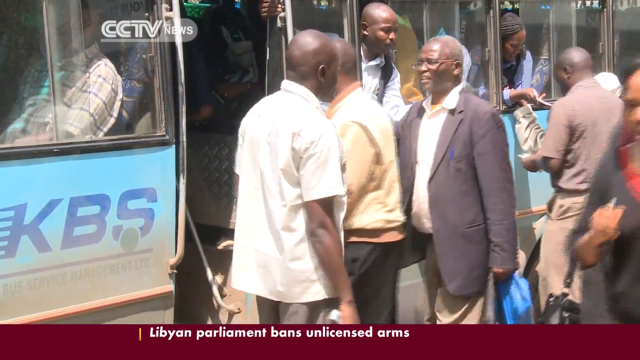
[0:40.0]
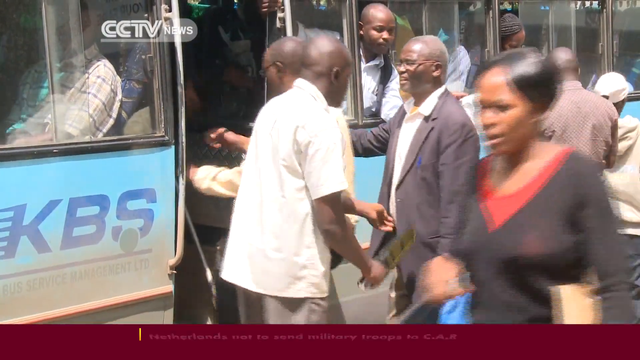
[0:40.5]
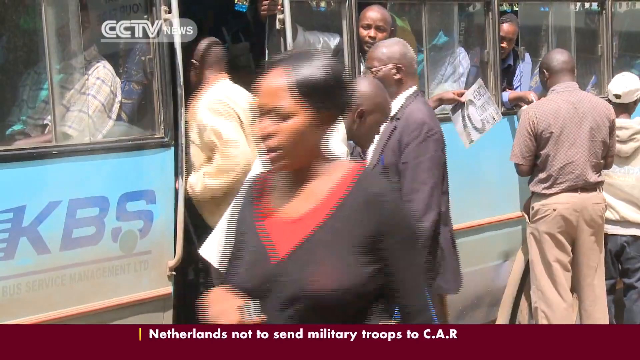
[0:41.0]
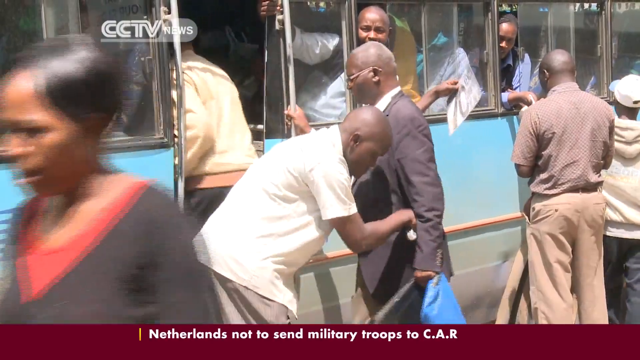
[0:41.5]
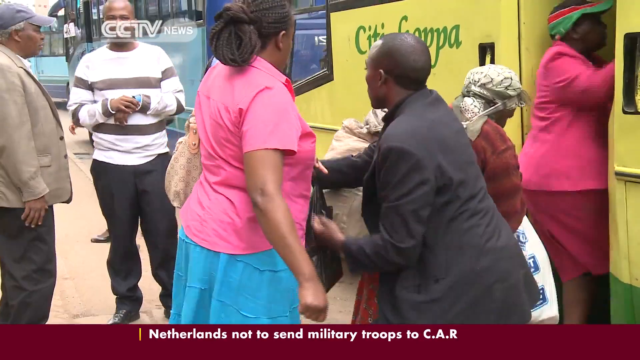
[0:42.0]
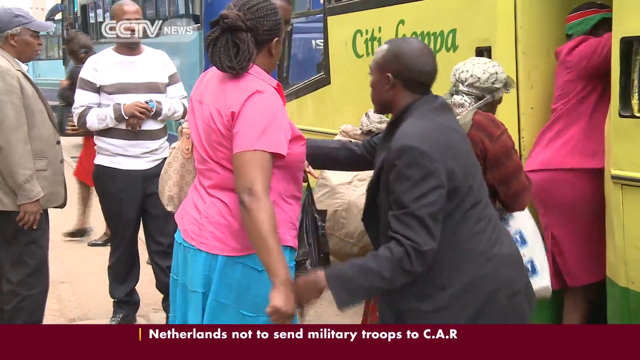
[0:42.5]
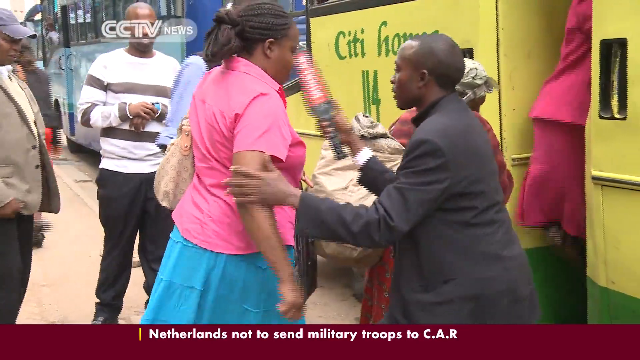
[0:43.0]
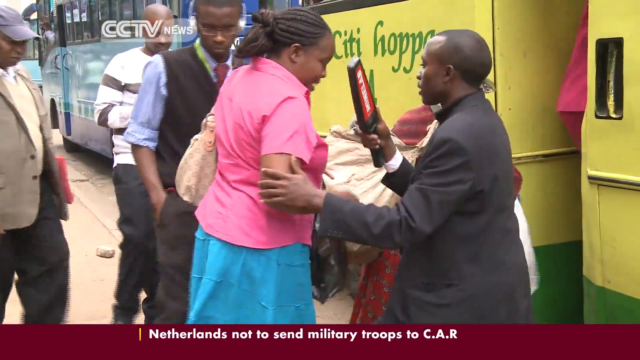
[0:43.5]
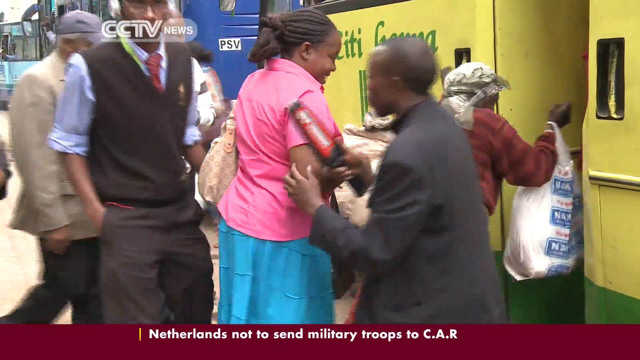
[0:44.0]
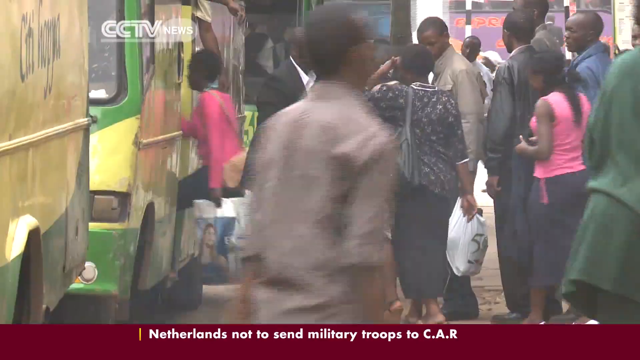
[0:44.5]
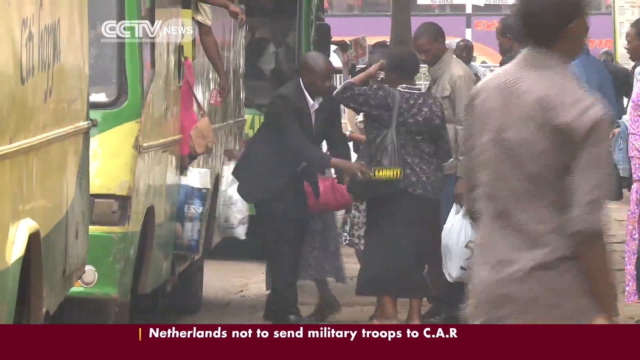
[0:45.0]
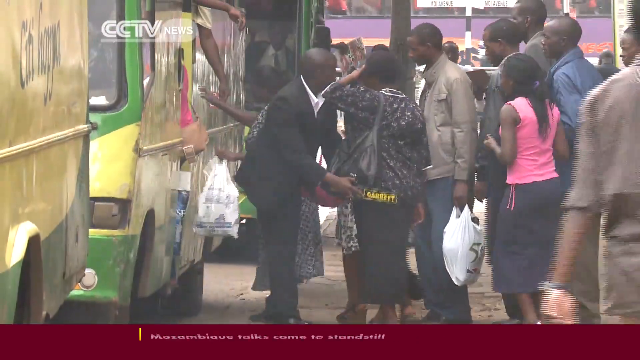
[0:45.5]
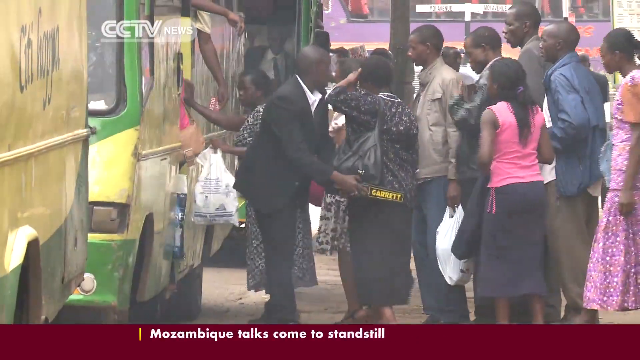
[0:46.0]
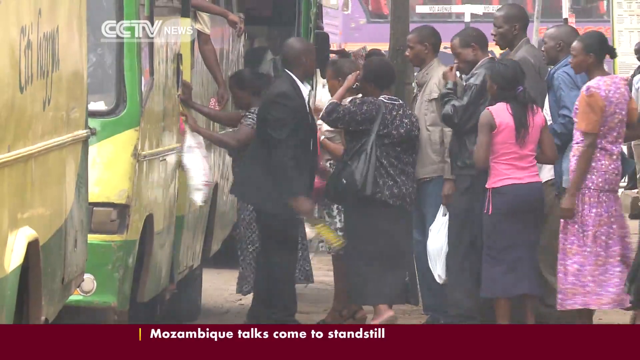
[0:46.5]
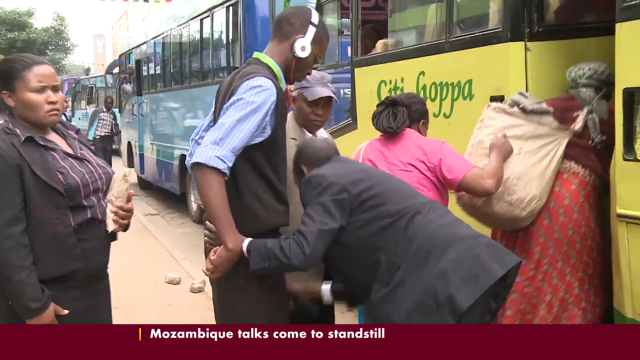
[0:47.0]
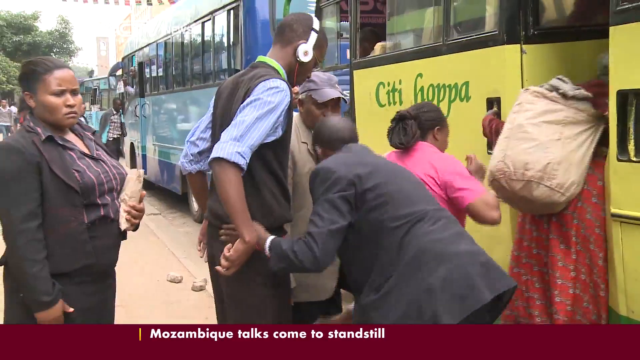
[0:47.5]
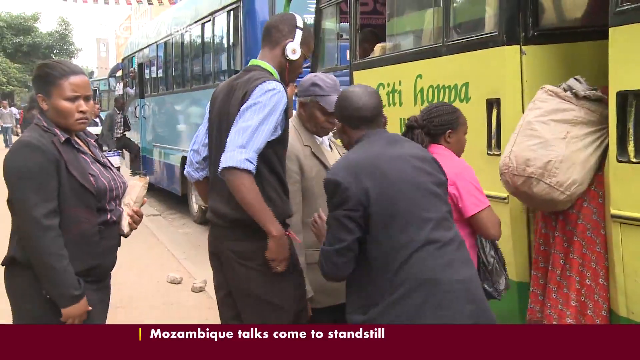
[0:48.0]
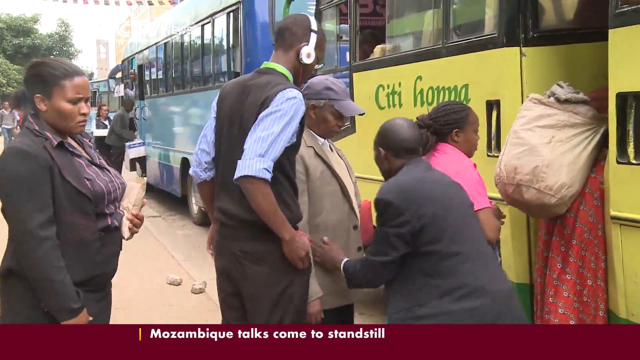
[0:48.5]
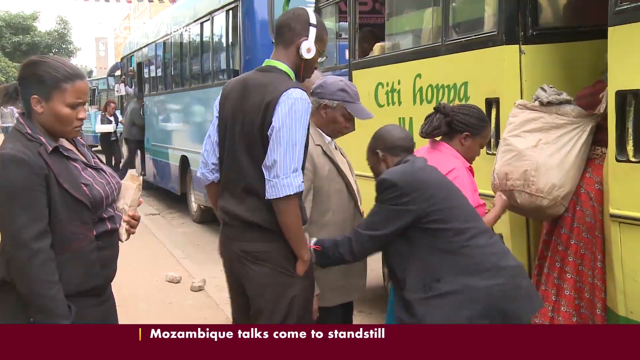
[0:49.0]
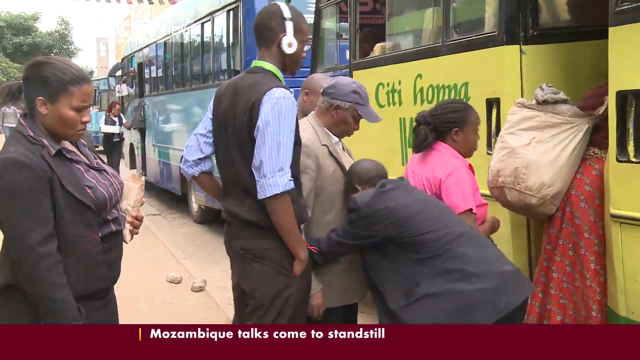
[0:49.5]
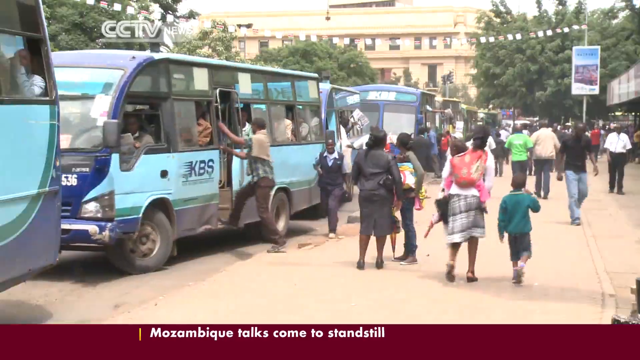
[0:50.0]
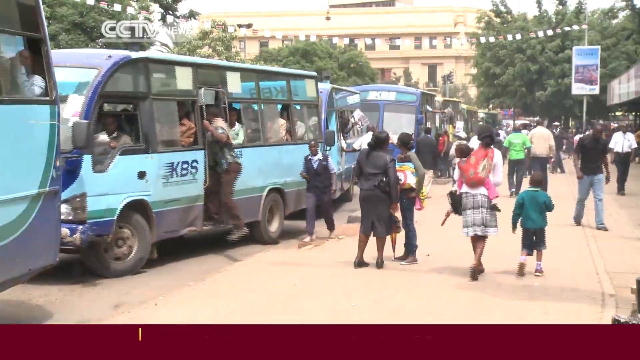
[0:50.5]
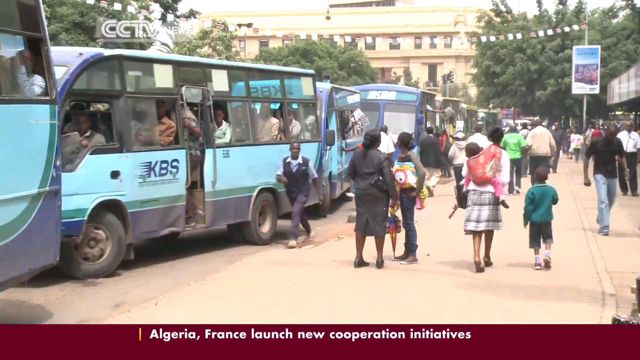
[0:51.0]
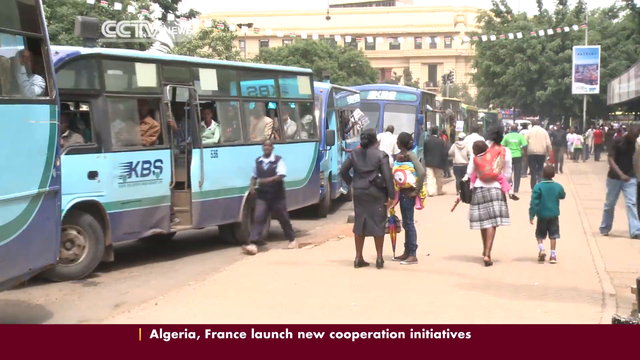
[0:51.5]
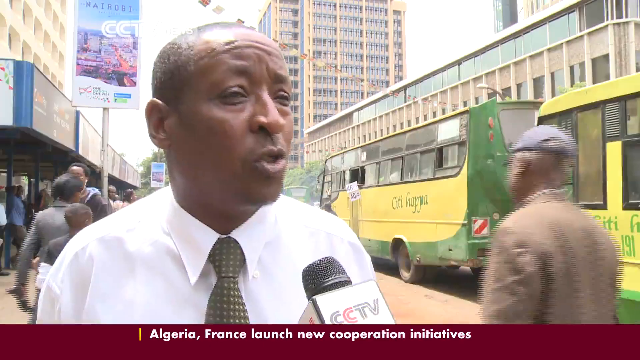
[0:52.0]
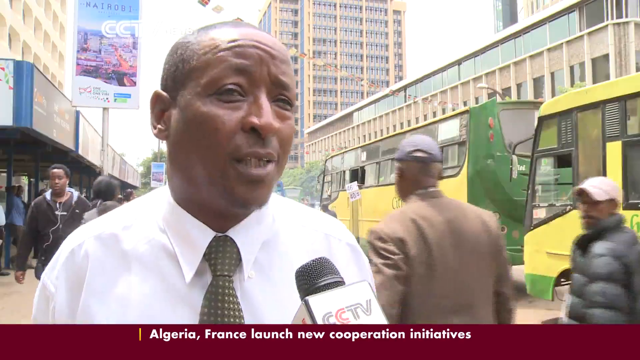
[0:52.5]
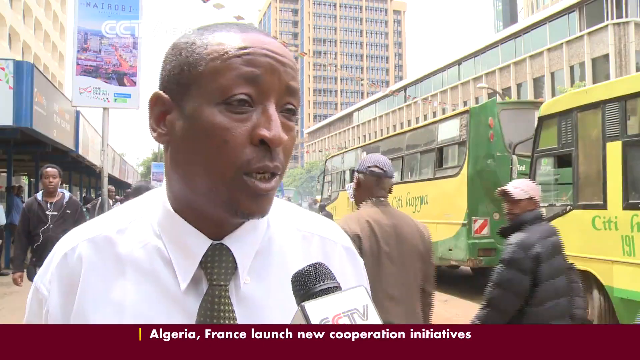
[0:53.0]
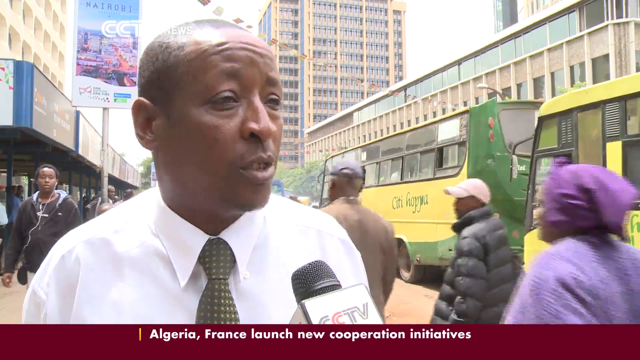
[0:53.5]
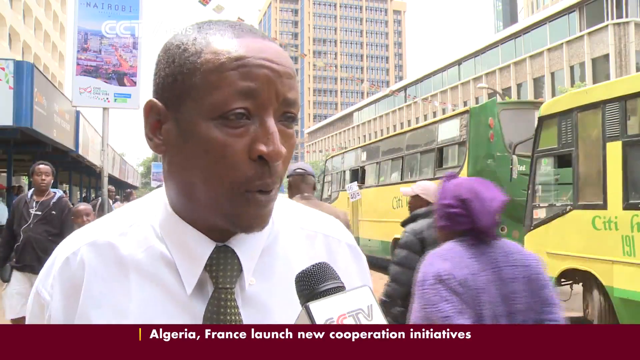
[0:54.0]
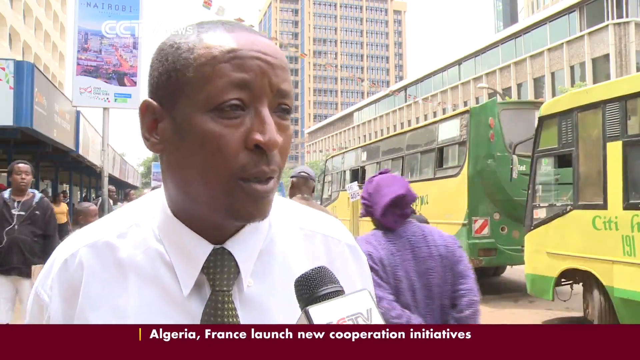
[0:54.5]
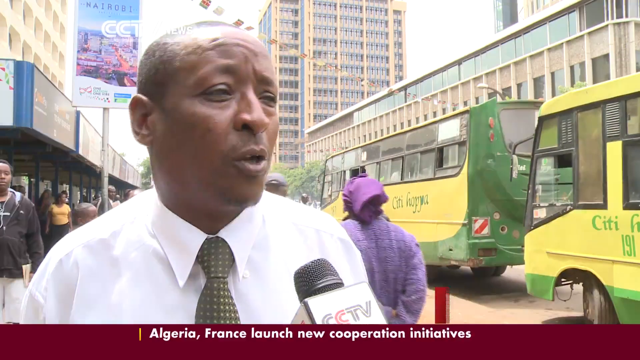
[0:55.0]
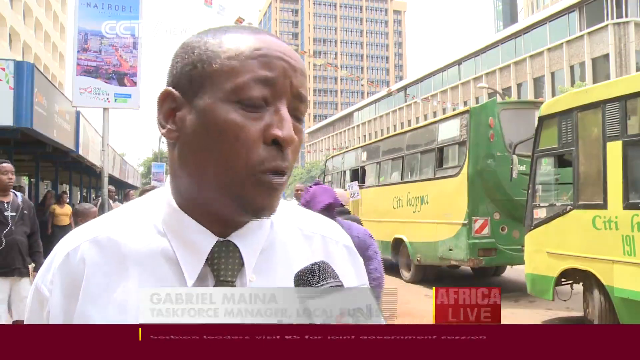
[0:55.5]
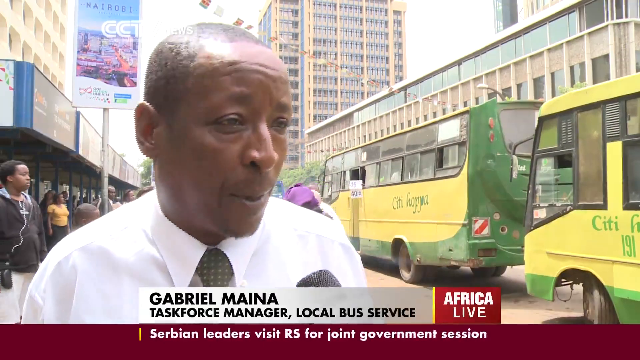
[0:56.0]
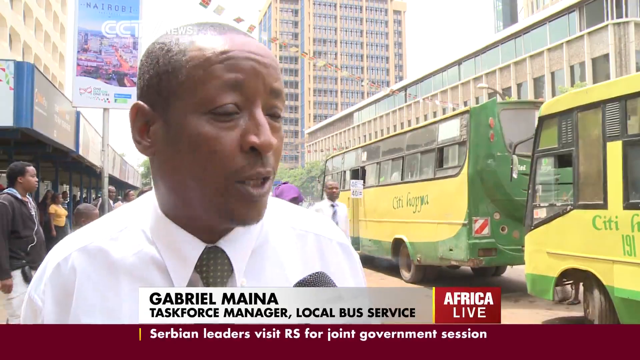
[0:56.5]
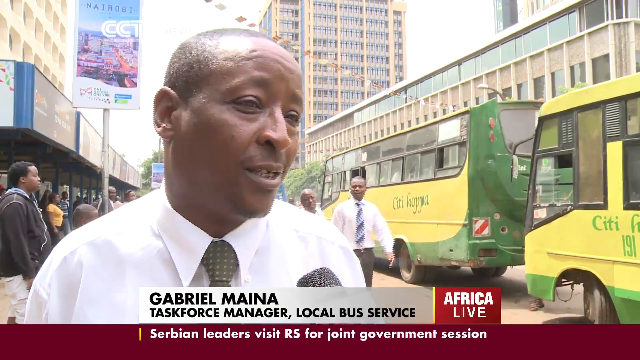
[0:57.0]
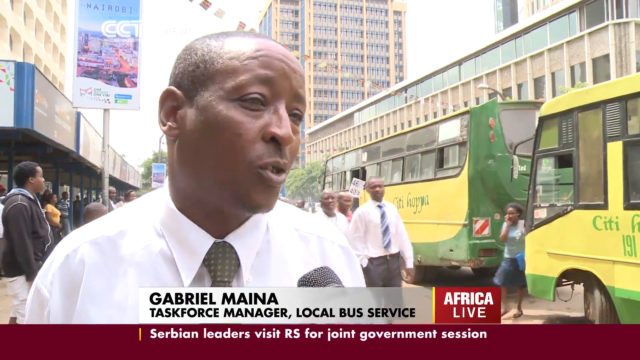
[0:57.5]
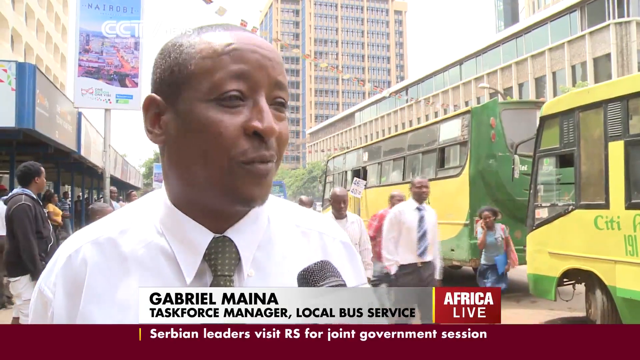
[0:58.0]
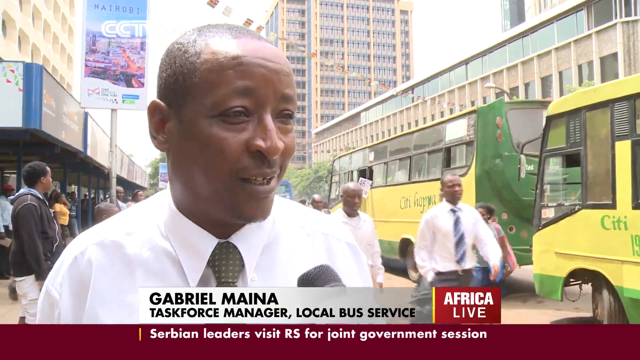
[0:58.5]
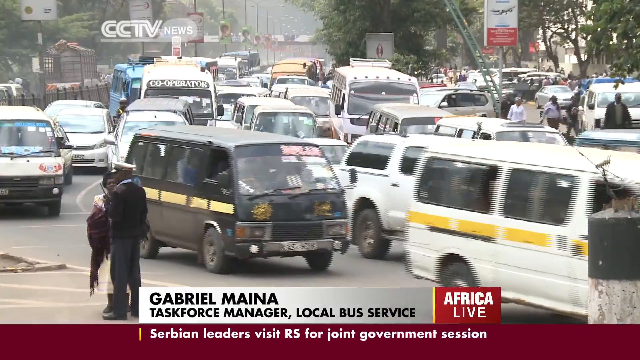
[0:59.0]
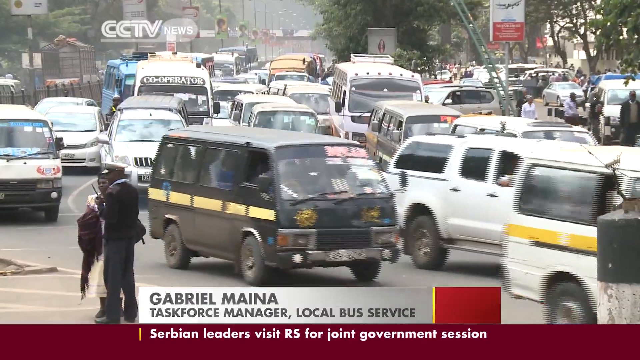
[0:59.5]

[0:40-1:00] Handheld metal detectors are used to check people before they board the bus. People wait in line and are checked by someone, unclear whether the bus driver or another person. Meanwhile the bus pulls away, and someone steps on, followed by another man reaching out to get on; they apparently were not checked. An interview follows with Gabriel Mena, task force manager for the local bus service, who stands next to yellow and green buses with people walking behind him. The roads look busy.